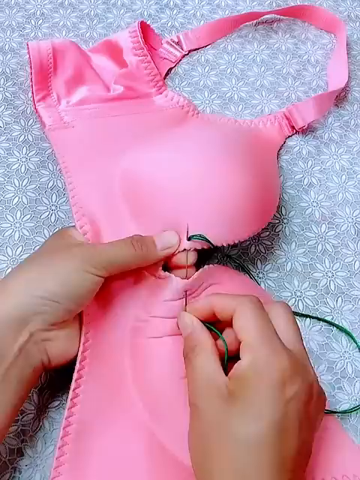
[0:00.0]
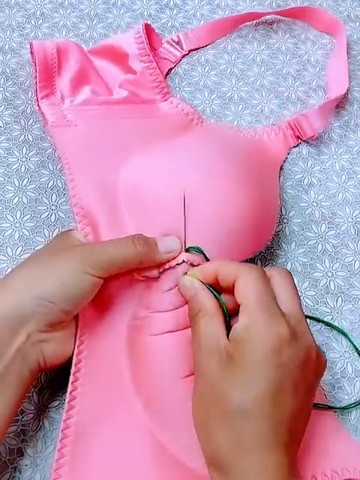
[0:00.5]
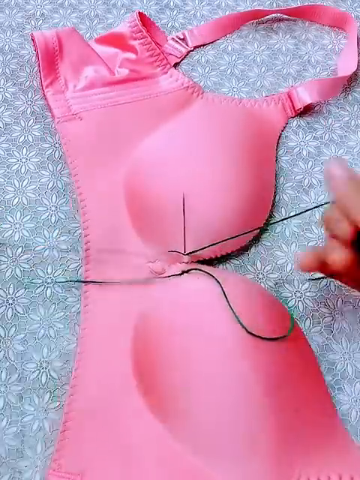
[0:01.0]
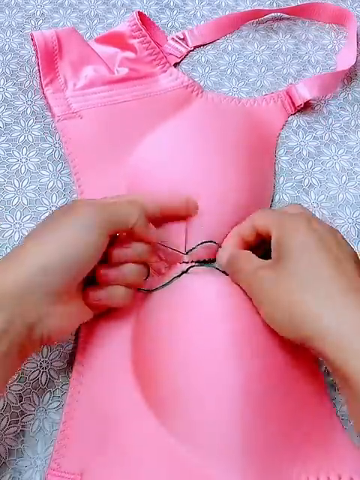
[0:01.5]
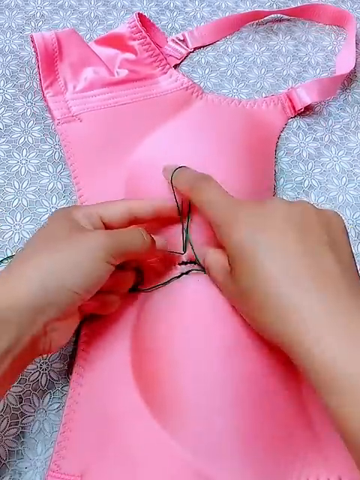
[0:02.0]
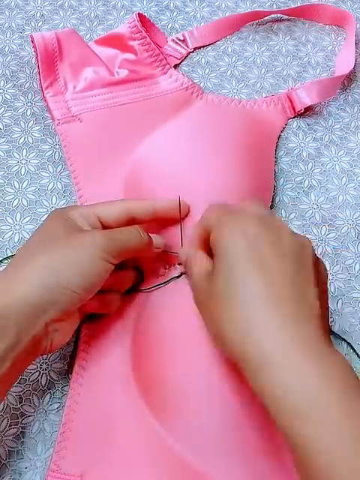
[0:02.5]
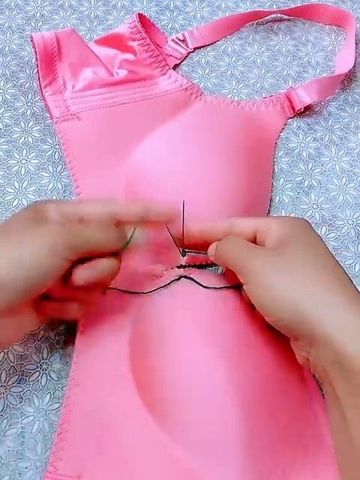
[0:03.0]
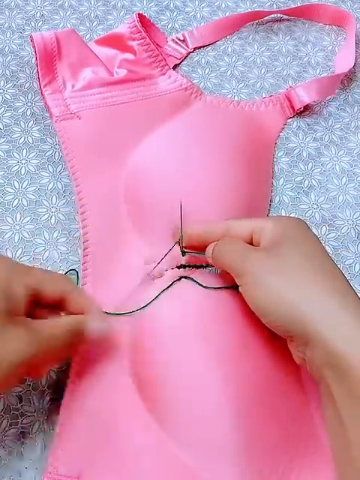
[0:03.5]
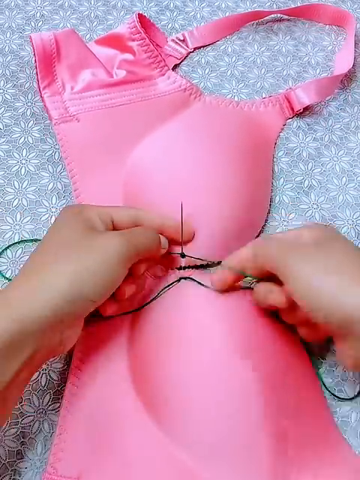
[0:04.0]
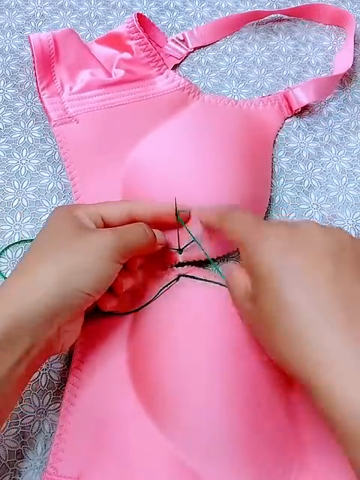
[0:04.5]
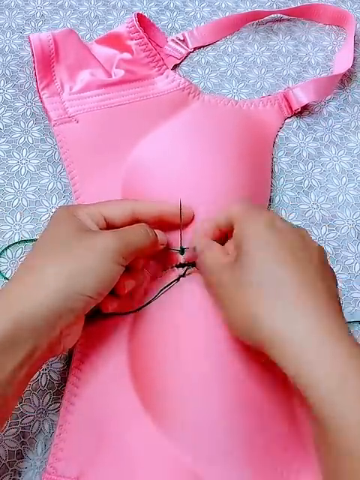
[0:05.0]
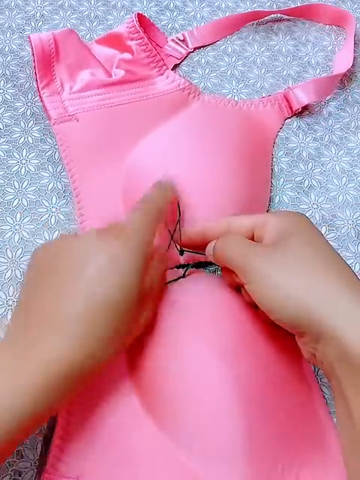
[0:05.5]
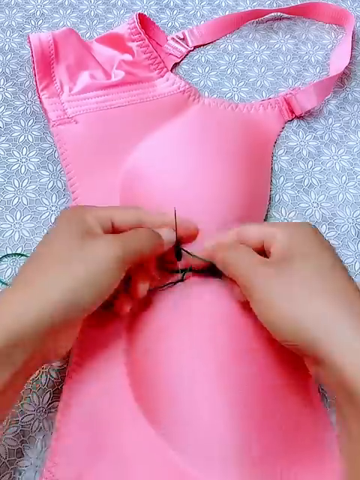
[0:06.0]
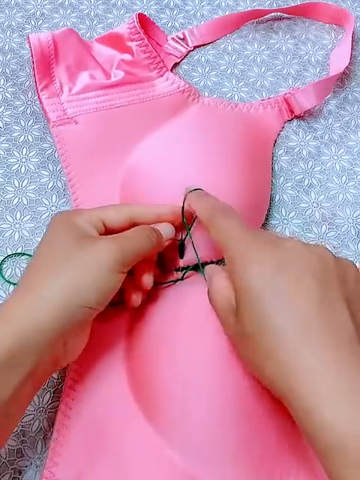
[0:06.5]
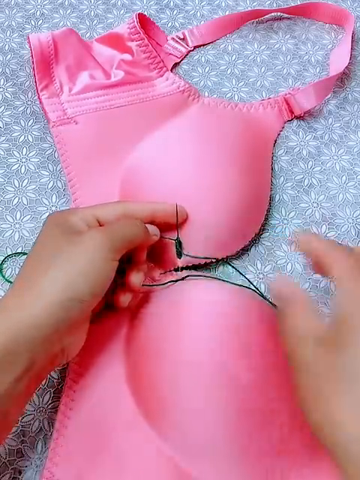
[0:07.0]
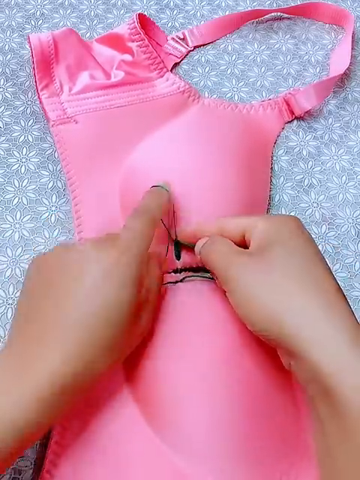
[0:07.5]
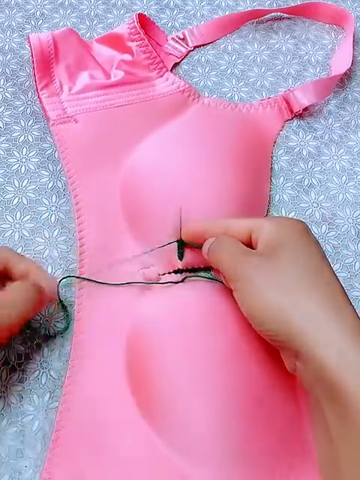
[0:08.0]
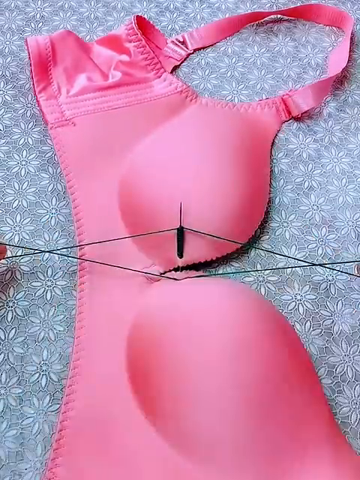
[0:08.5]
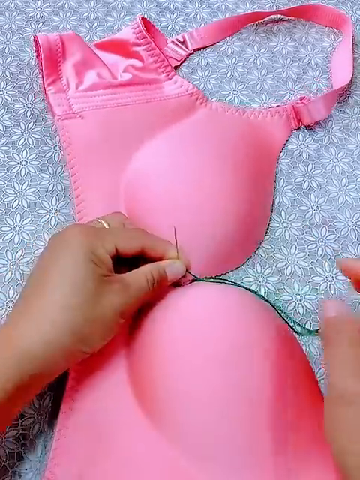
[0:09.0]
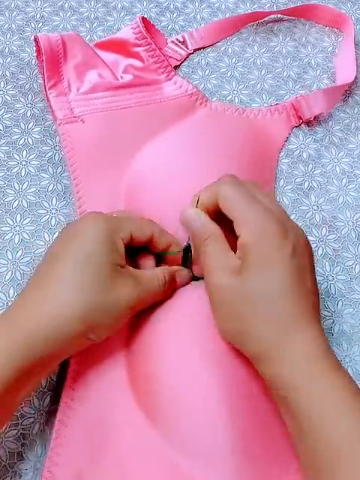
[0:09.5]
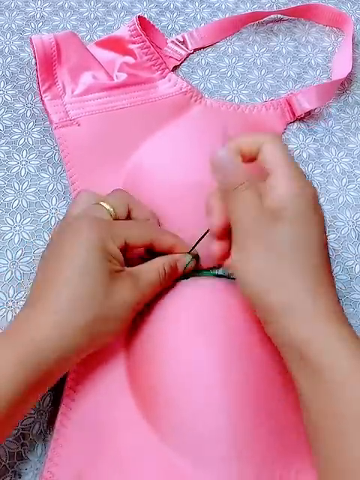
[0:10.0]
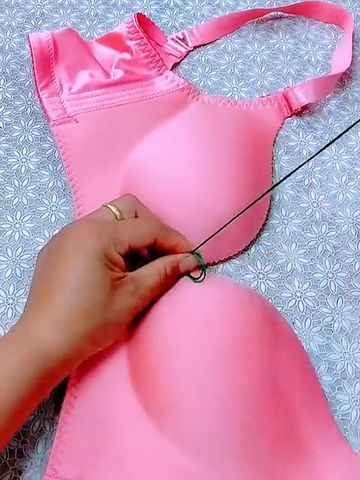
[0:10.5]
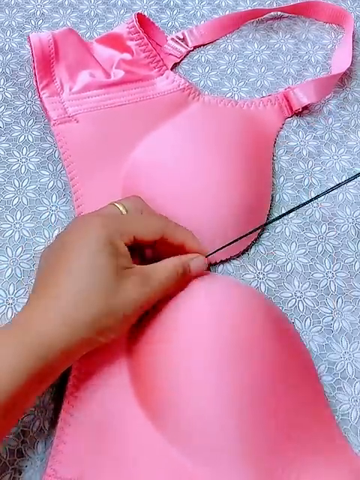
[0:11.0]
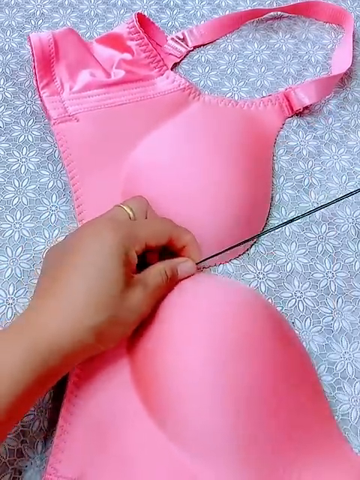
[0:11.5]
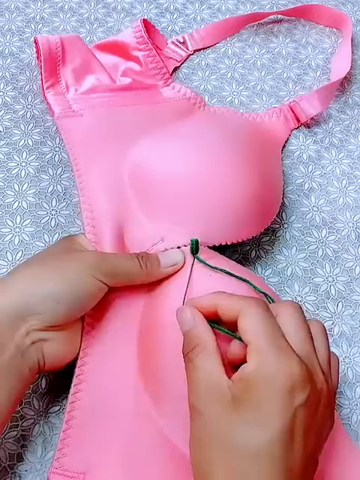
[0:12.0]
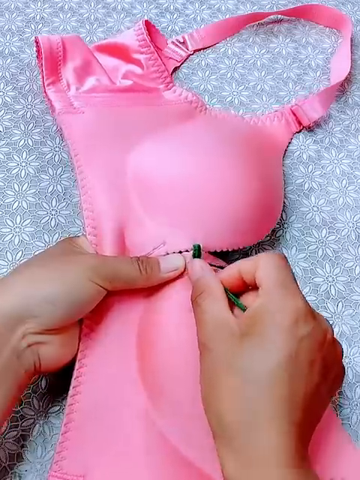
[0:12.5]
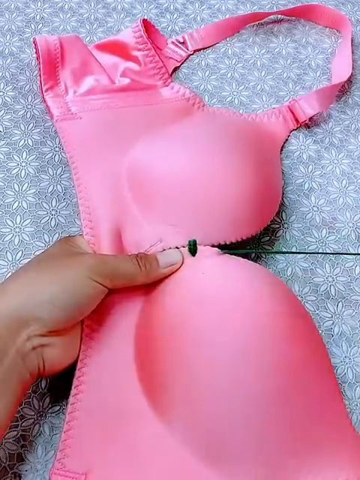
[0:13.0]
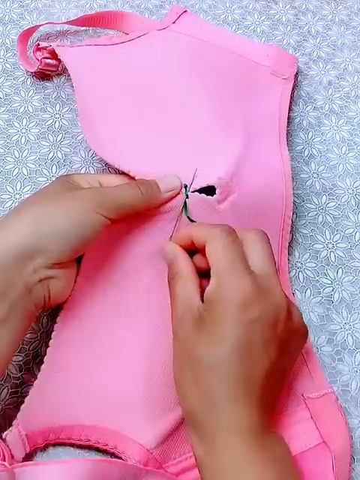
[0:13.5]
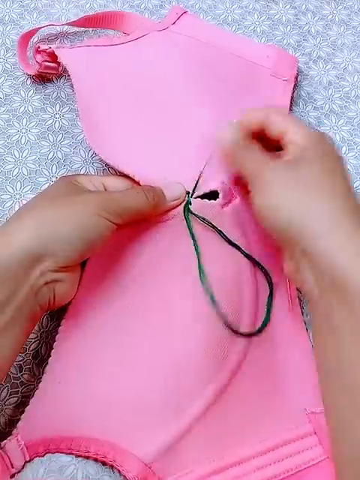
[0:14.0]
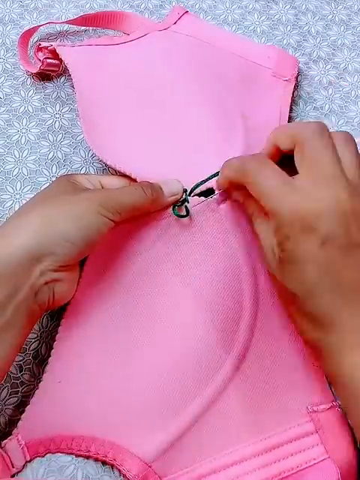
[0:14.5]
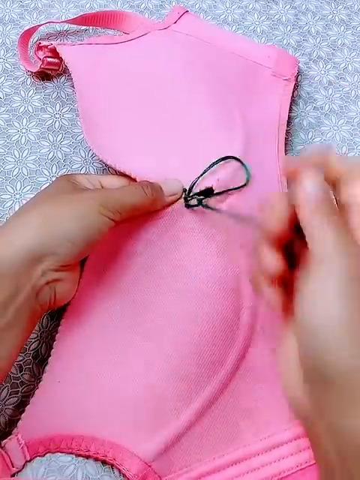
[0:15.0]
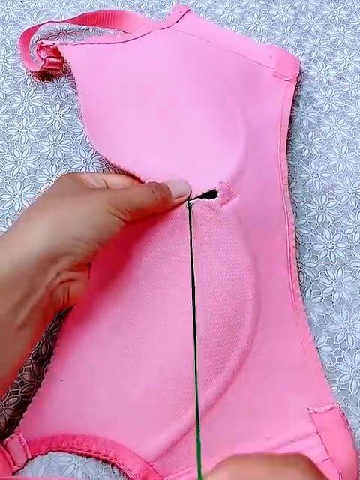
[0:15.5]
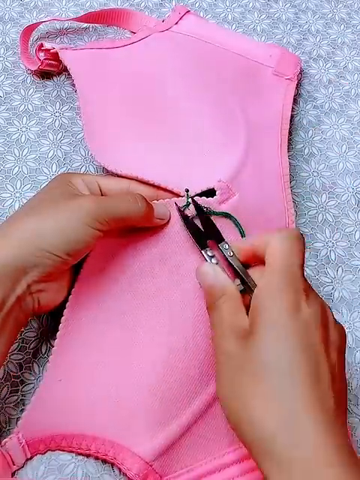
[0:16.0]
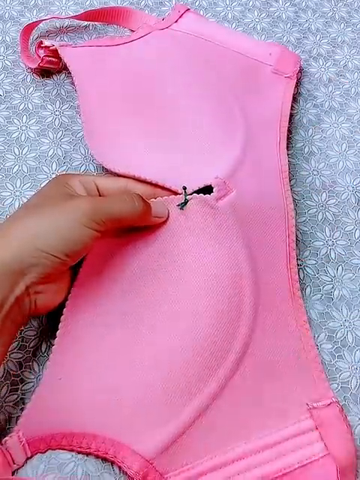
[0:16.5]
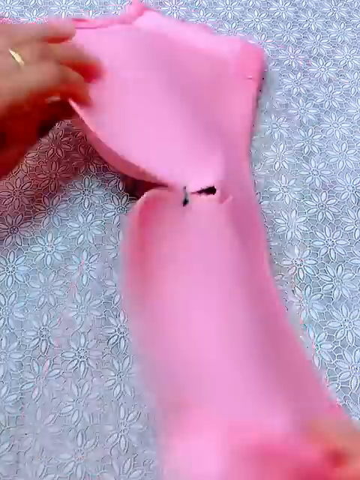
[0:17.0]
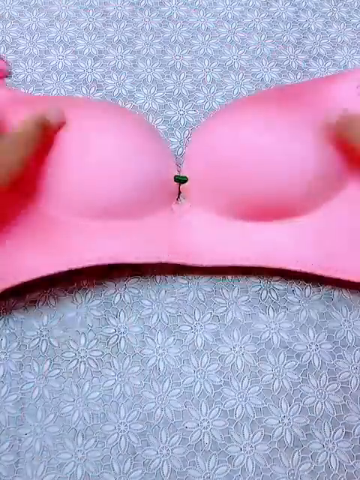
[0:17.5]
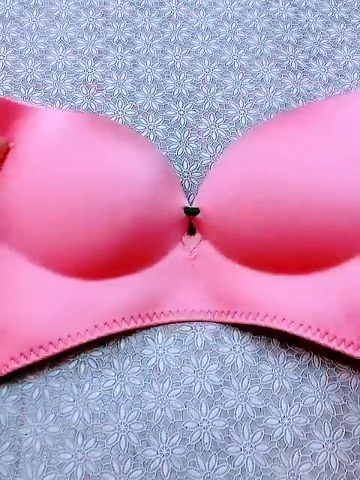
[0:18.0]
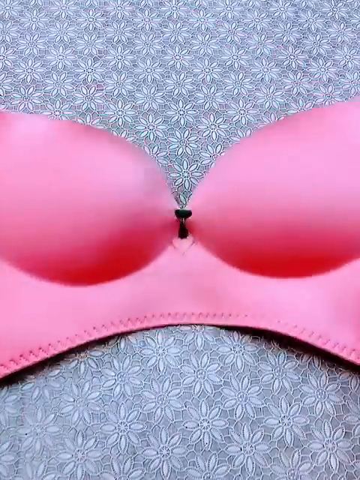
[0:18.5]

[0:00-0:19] Two hands belonging to a person with olive-like skin work on a shiny pink bra that appears to be made of foam. The person holds a needle with green thread and threads it in the middle area of the bra, where the cleavage is. A ring is on one finger of what looks like the right hand, either the index, middle or ring finger; the hands move quickly. The person loops the thread along the bottom of the needle before looping it through the center, almost as if sewing together the bottom part of the bra's cleavage area. After looping it through and making a stitch, the person uses small scissors in the right hand to cut off the excess thread. The person then turns the bra around and pulls, revealing a little green area where the center of the bra is now stitched together.